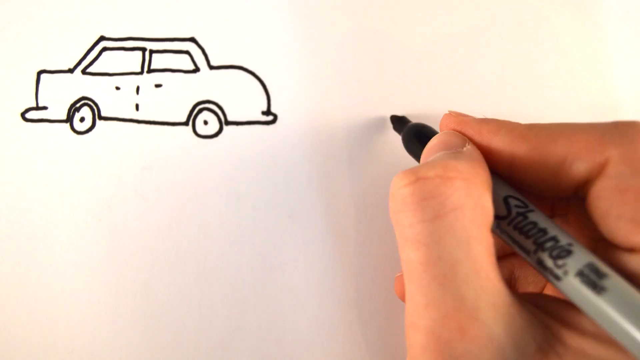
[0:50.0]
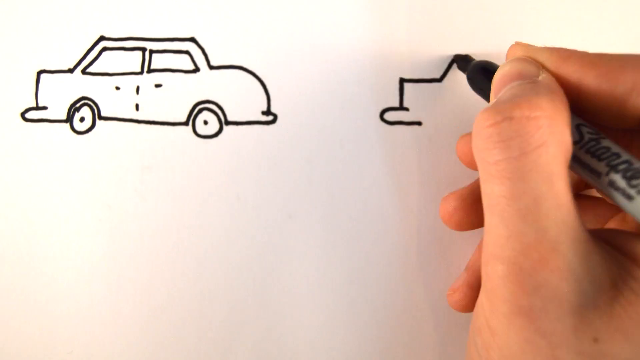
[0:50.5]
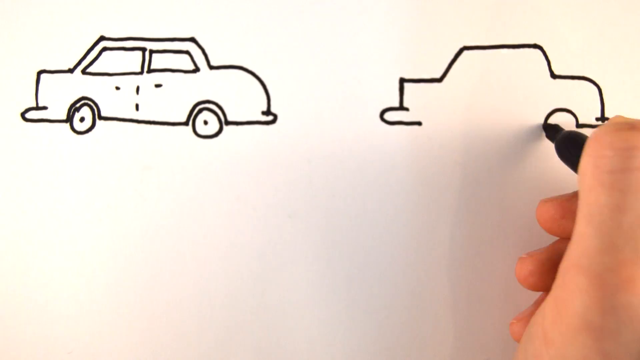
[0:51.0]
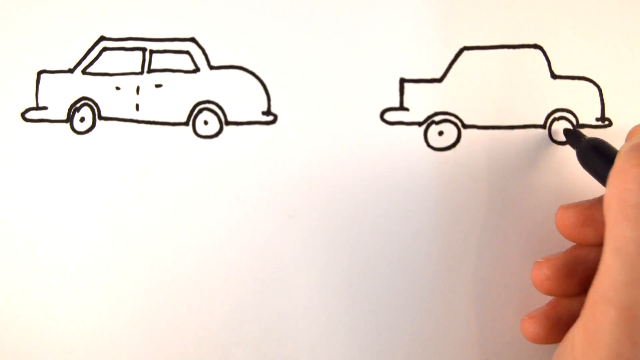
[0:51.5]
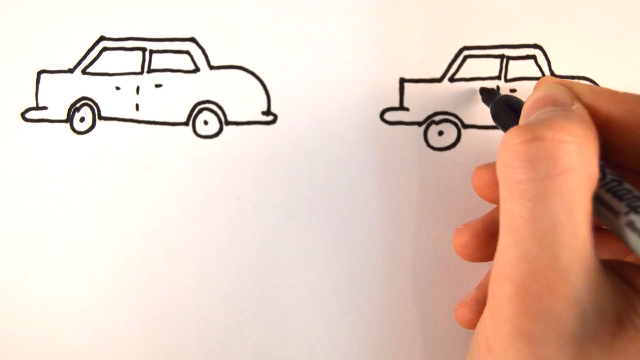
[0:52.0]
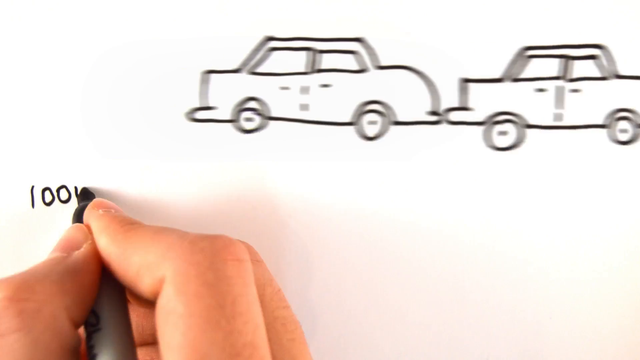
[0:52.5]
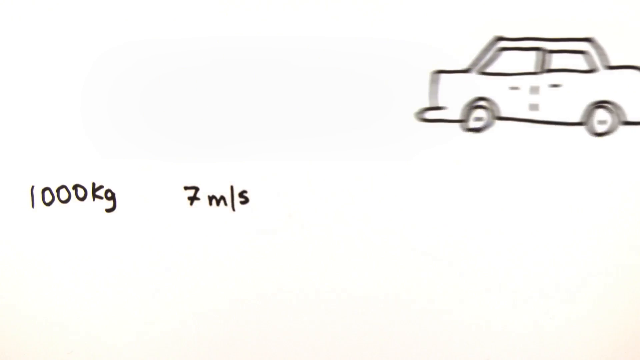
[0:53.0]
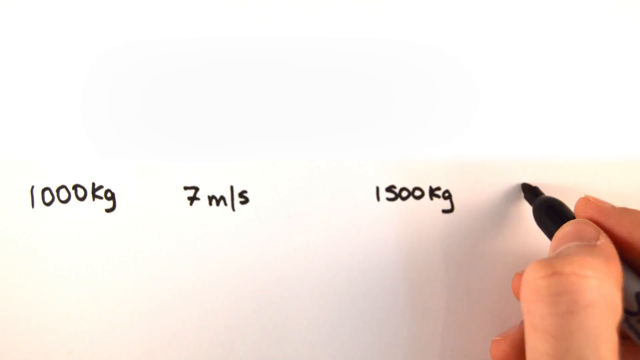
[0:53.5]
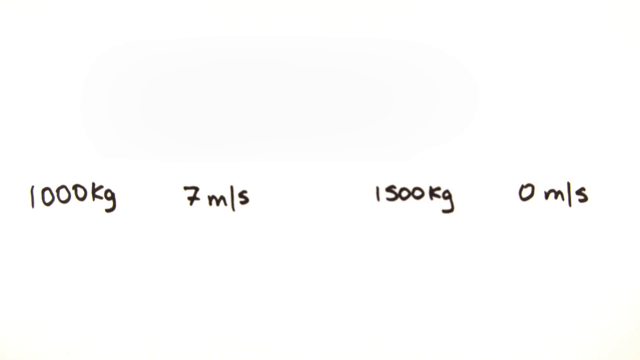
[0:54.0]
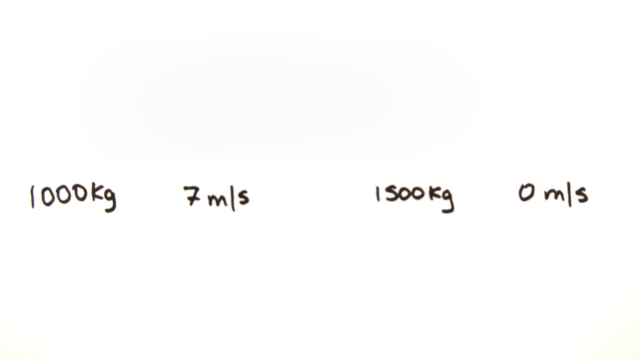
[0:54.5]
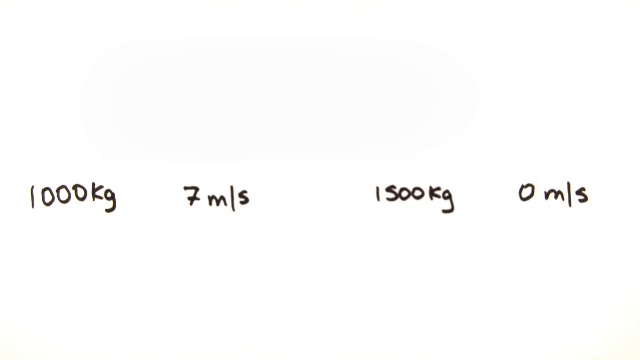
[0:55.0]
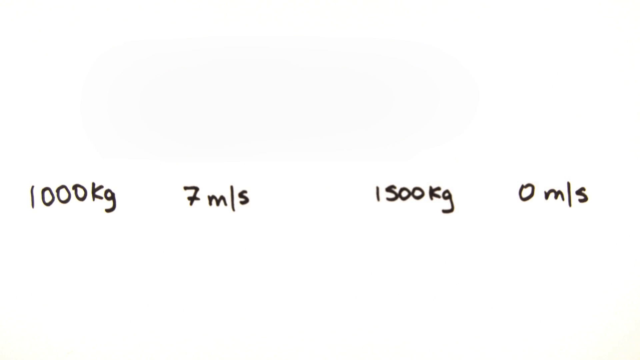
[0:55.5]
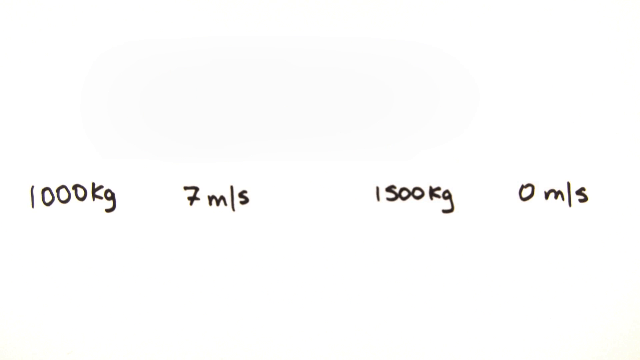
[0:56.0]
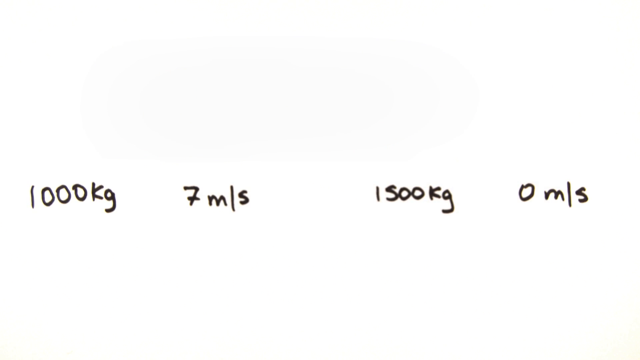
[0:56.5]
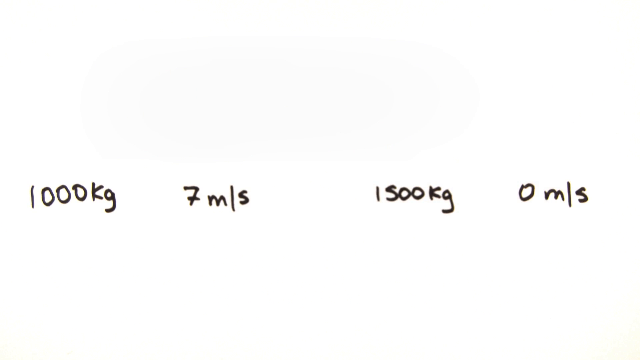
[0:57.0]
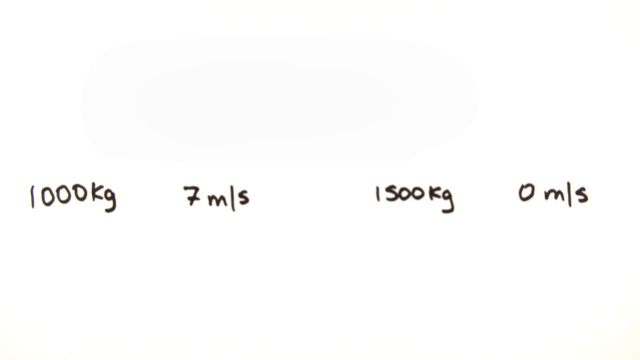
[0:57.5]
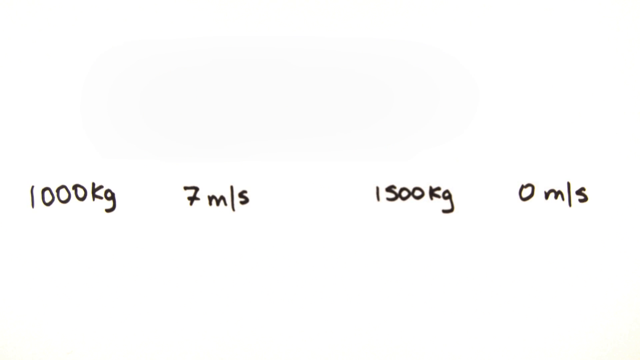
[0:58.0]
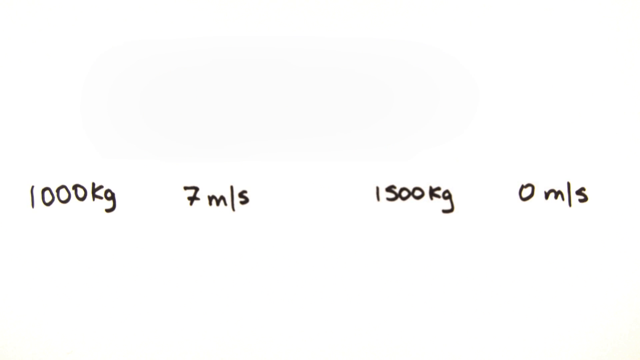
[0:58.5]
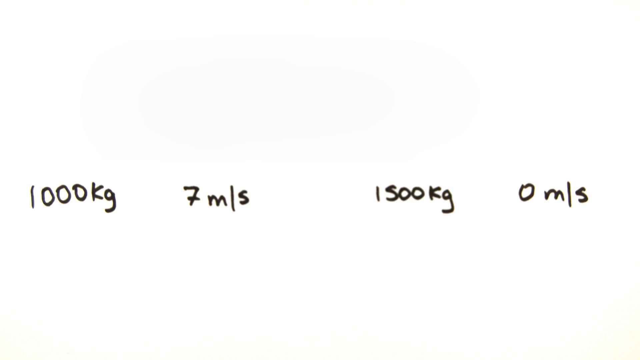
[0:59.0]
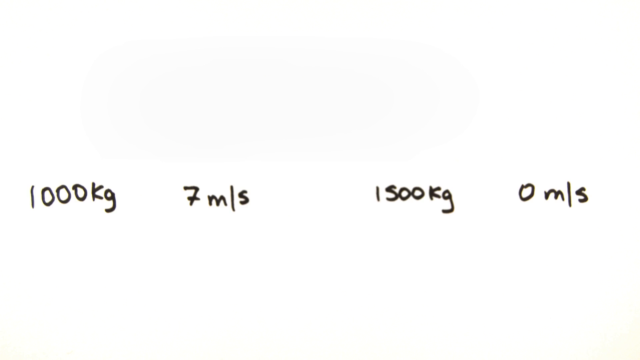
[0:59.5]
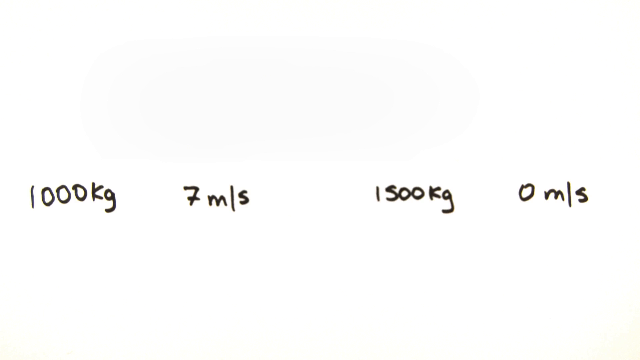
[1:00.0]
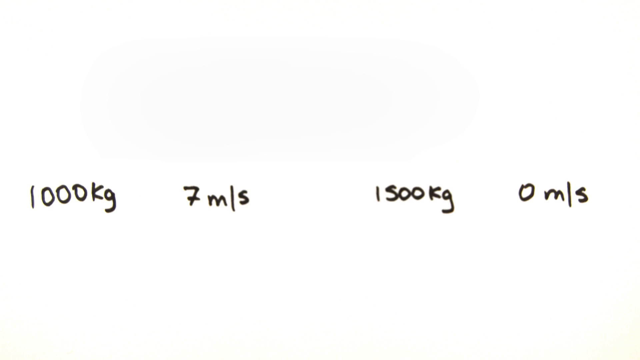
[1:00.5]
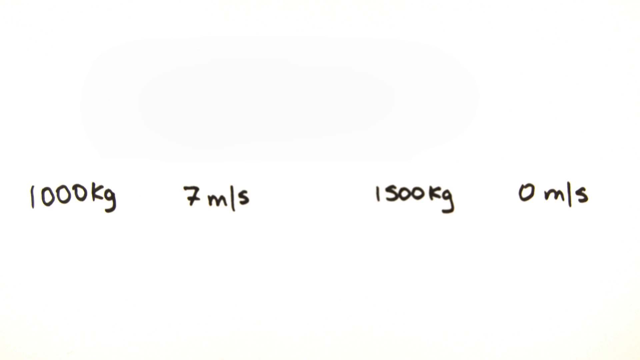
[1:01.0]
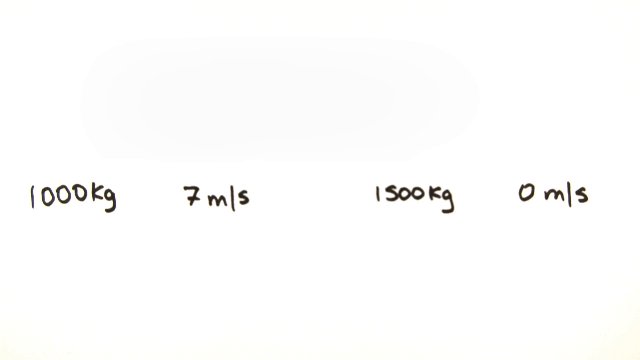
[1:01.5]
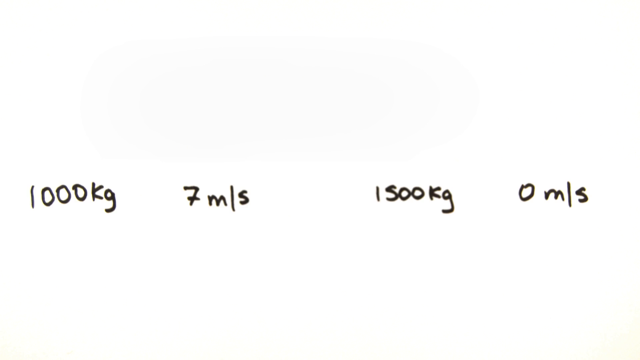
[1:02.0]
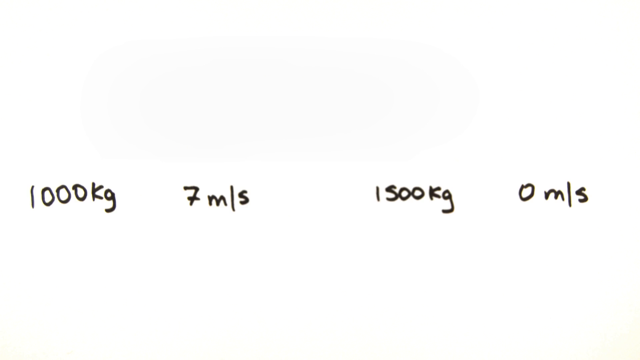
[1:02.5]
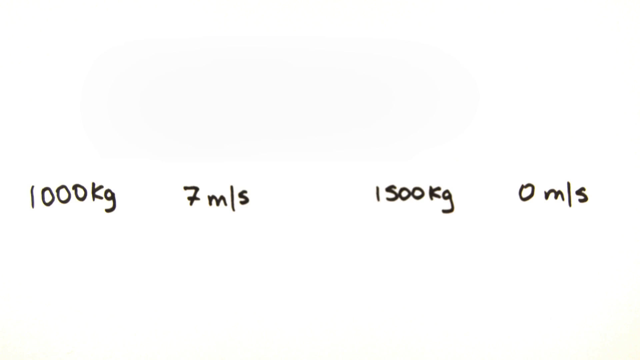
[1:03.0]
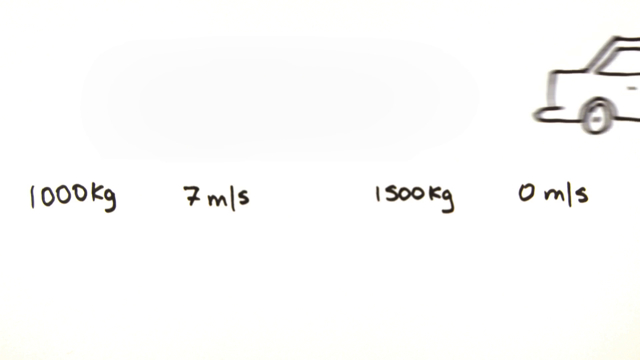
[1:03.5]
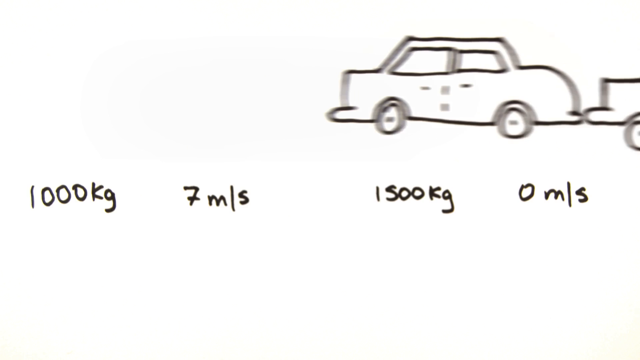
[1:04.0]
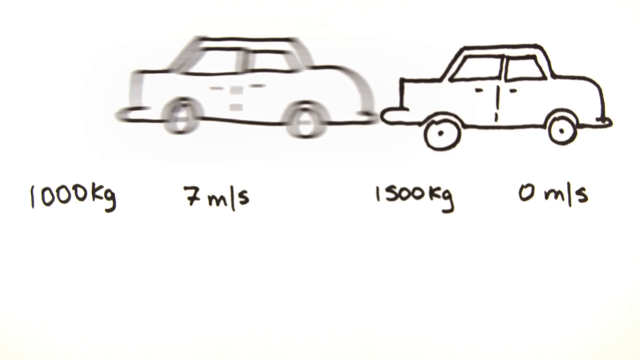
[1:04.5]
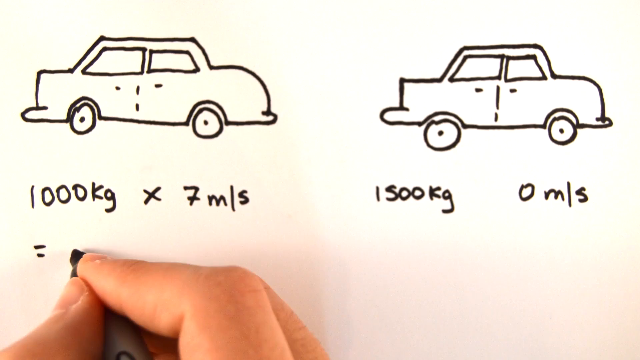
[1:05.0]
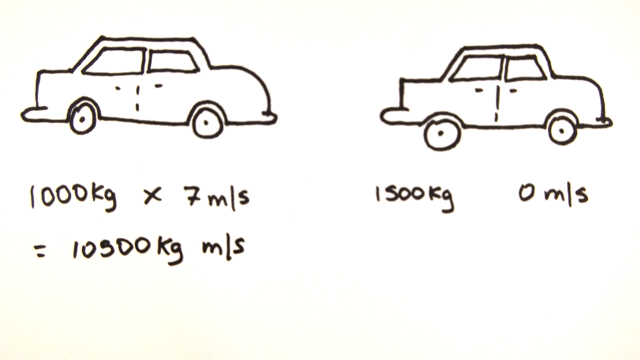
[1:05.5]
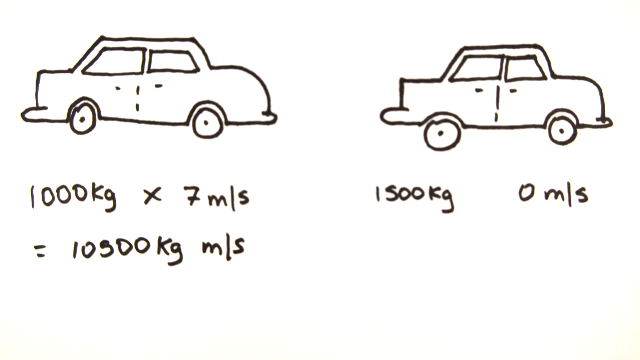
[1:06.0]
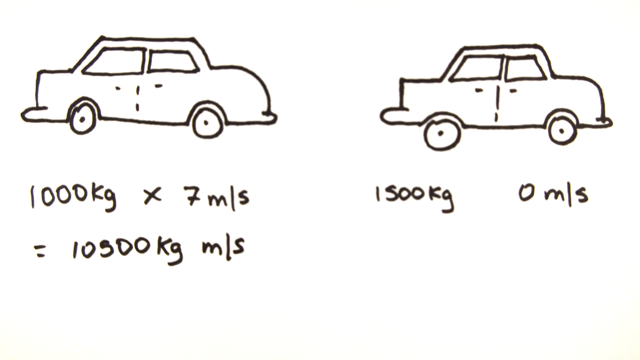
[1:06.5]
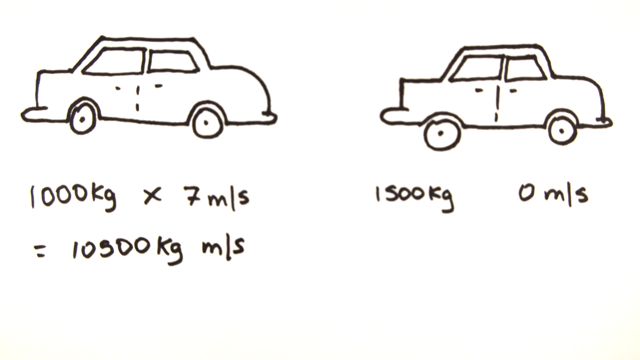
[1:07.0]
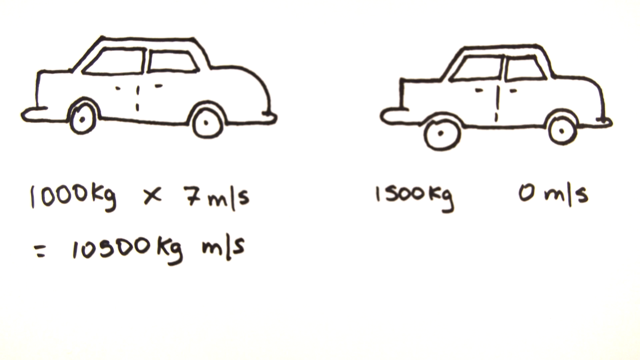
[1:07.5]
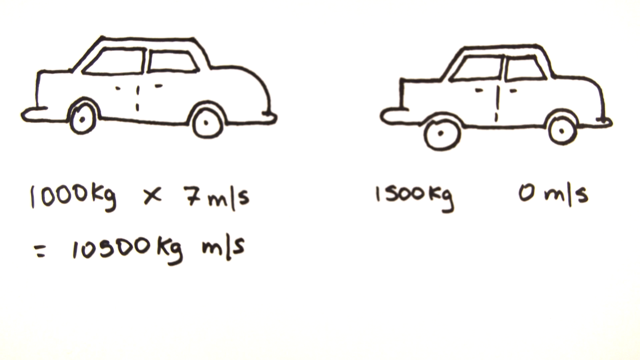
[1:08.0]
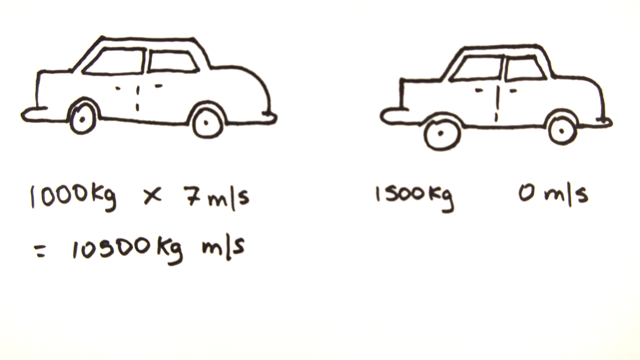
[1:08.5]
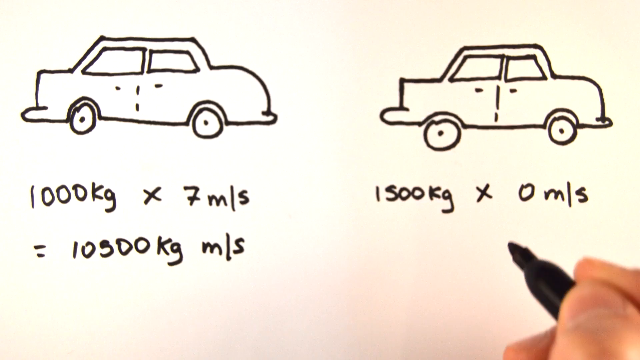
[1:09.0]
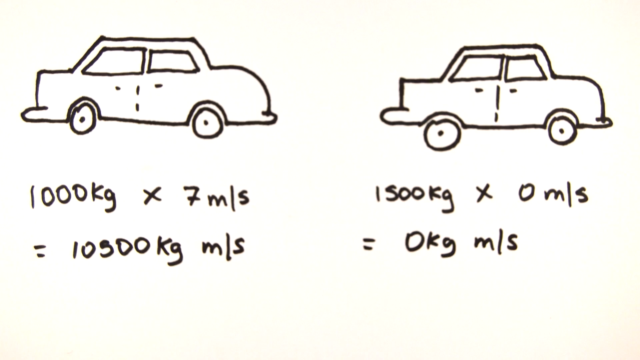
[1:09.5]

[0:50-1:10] A car with its side wheels showing is on the left. The person holds a black Sharpie with the thumb on the left side and the pointer and middle fingers on the right side. Another car is drawn, and the cars seem to come to life, one hitting the other as they drive toward the right side. Text reads "1,000 kg" and "7 m/s", then "1,500 kg" and "0 m/s". The two drawn cars come back with an equals sign, and text apparently reads 10,500 or 10,300 kg m/s, along with "0 kg m/s".